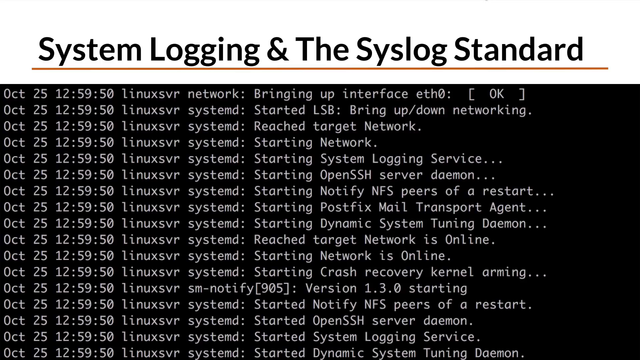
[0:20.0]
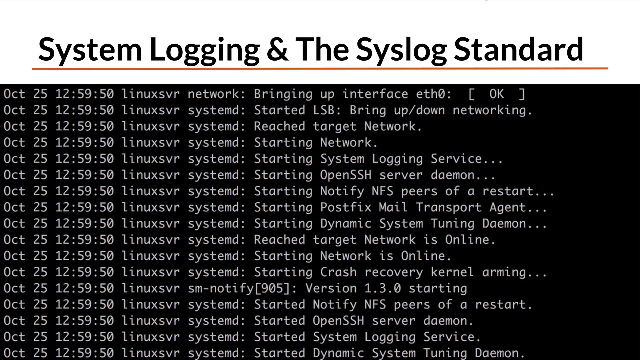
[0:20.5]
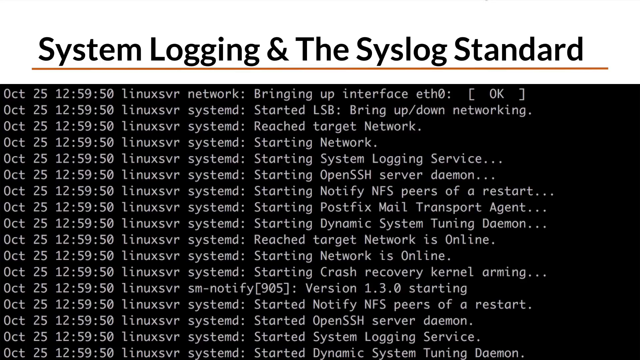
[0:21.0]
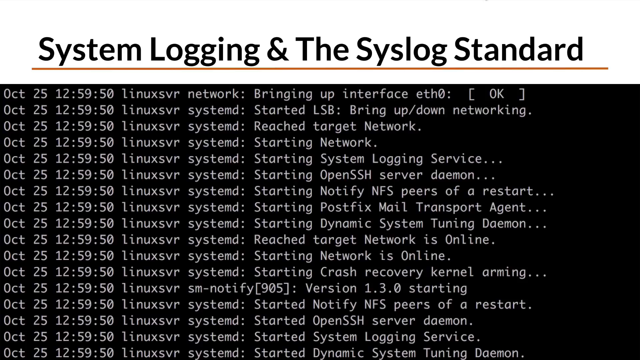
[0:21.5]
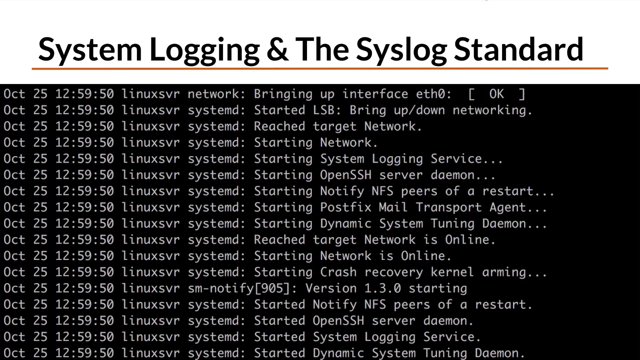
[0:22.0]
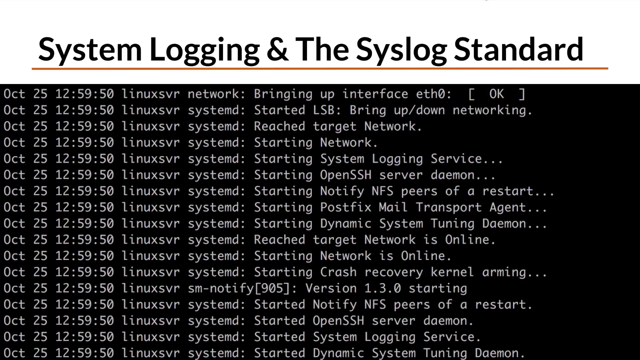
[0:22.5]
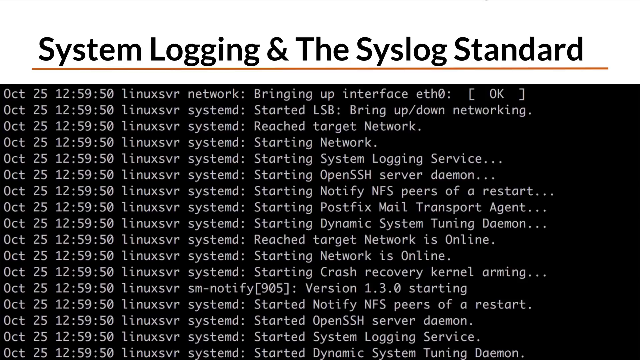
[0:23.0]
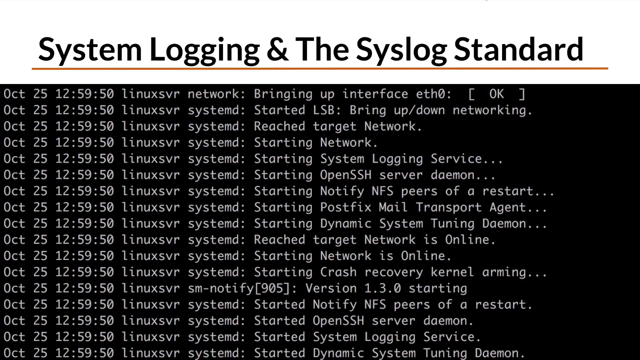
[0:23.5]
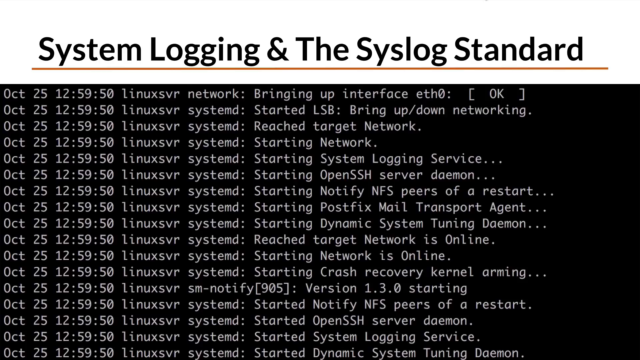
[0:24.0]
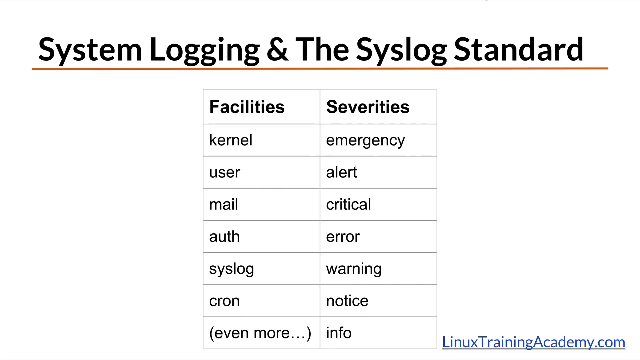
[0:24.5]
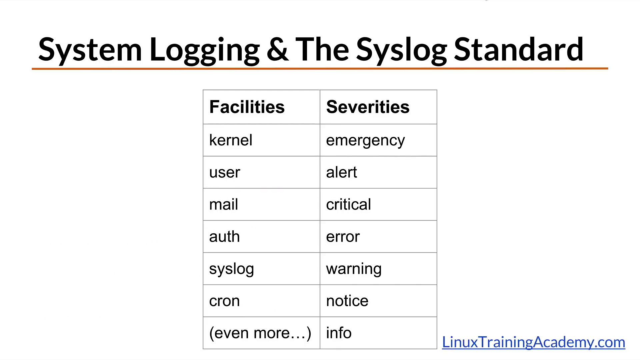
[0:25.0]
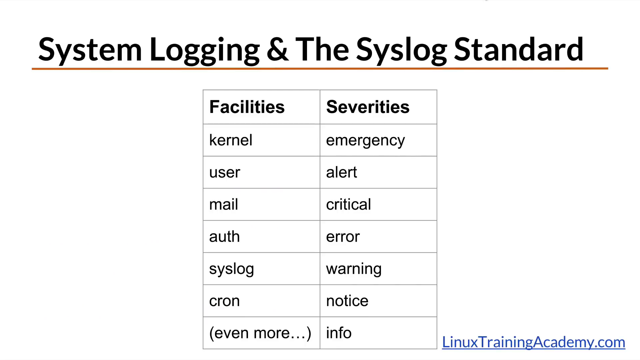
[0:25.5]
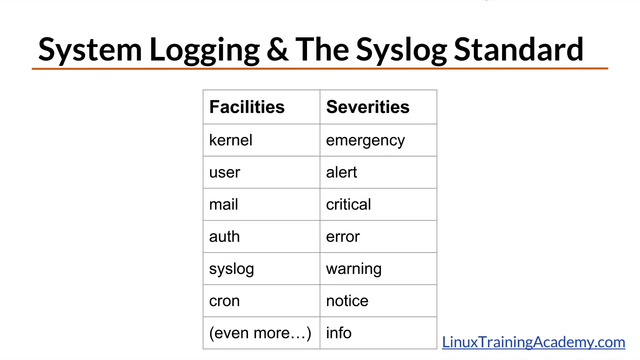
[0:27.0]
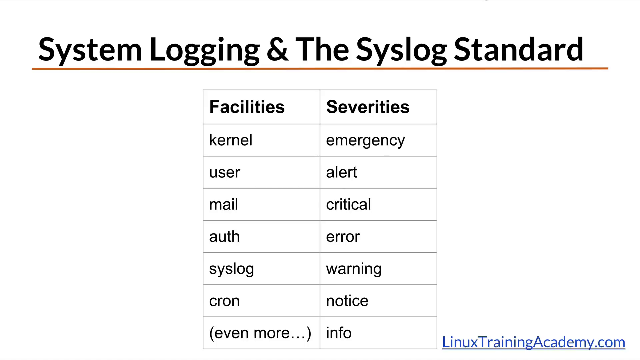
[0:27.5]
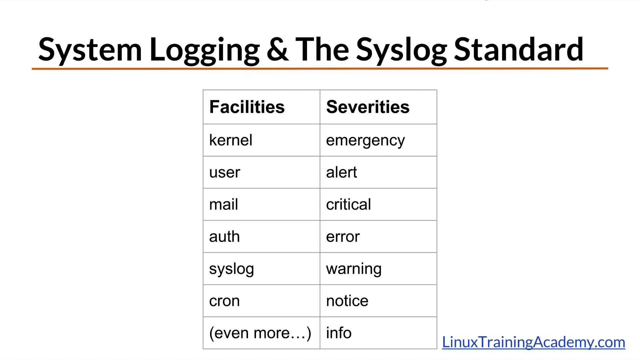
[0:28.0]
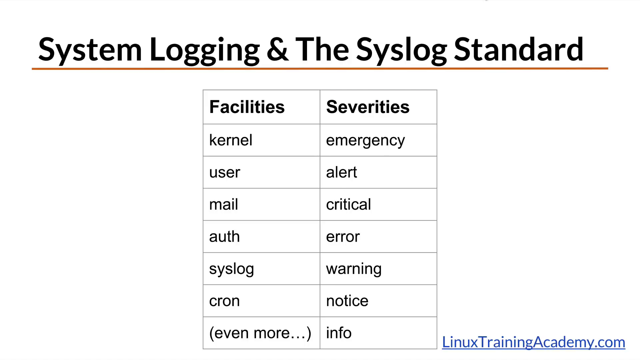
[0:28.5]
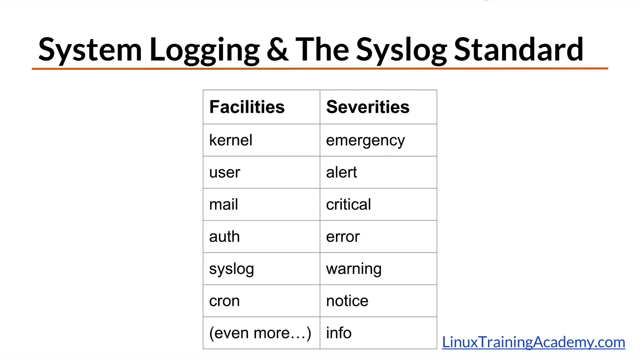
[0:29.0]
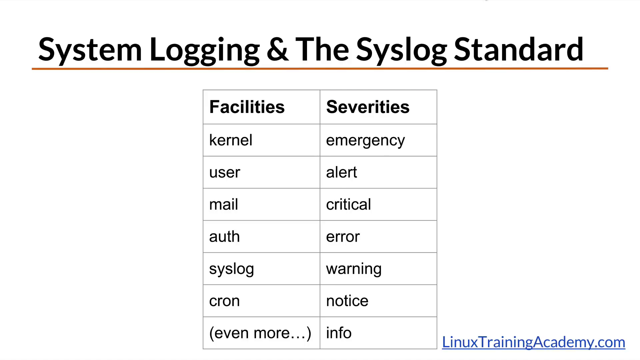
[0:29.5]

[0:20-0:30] Code made up of many lines of white text appears on a black background. The screen then quickly transitions to another screen with two columns side by side, one labeled "facilities" and the other "severities". The facilities are kernel, username, authorization, syslog and cron, and the severities column lists a number of other words.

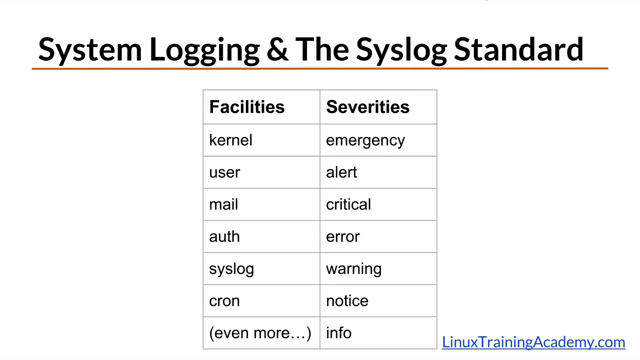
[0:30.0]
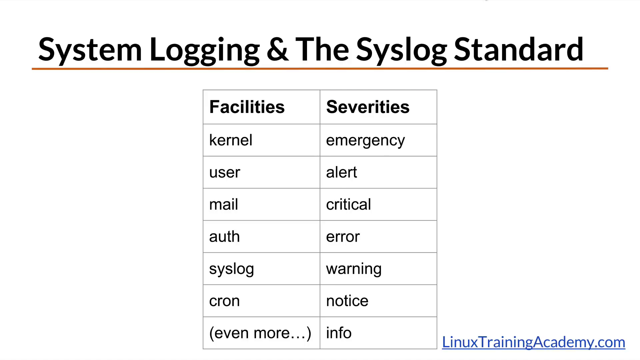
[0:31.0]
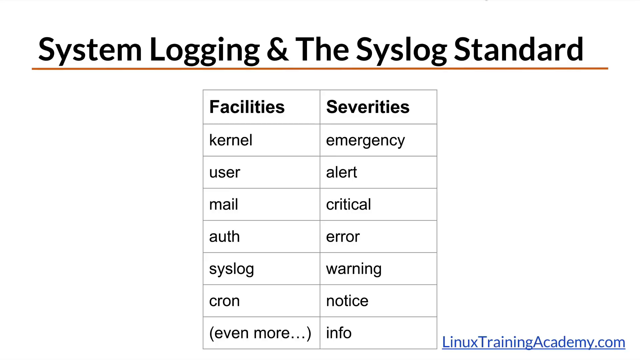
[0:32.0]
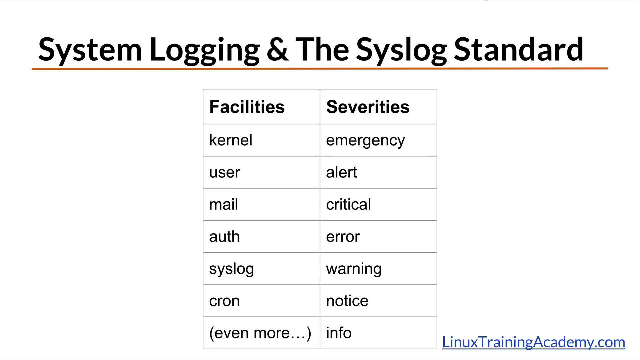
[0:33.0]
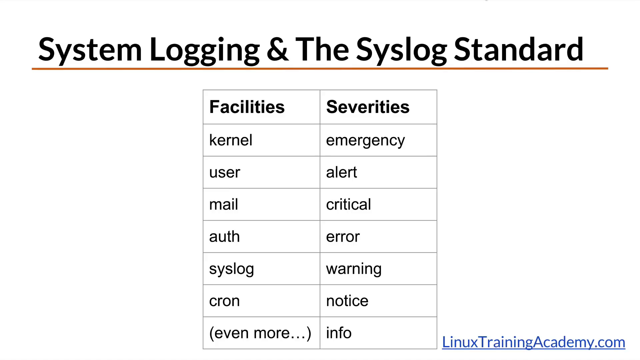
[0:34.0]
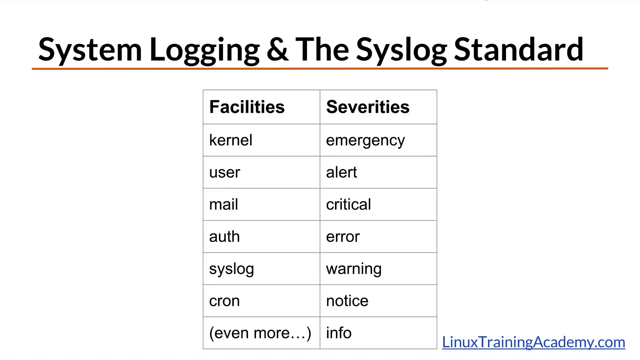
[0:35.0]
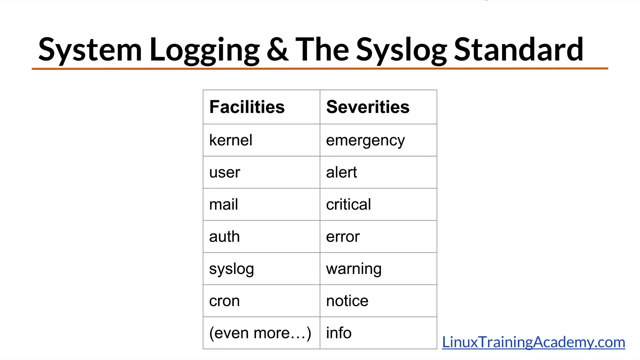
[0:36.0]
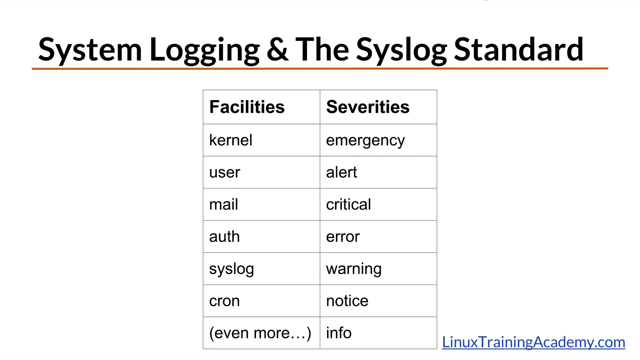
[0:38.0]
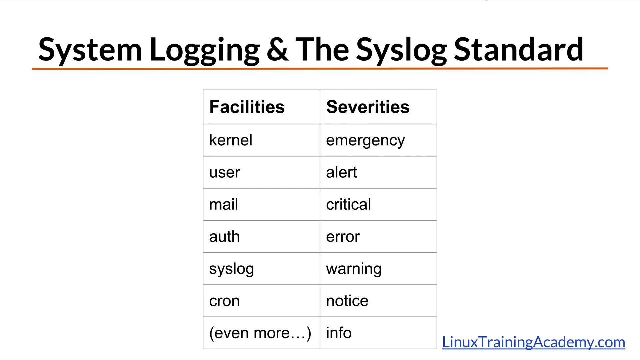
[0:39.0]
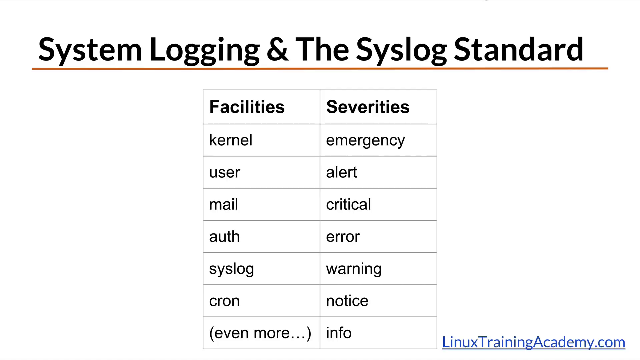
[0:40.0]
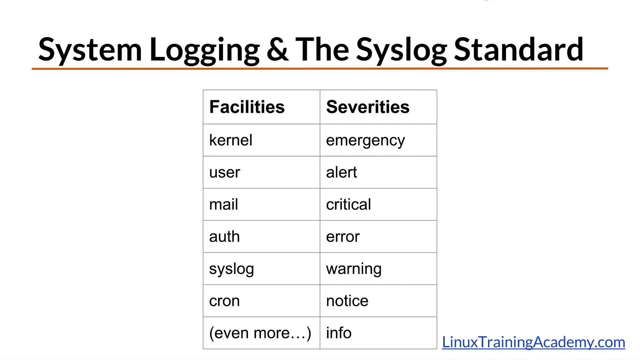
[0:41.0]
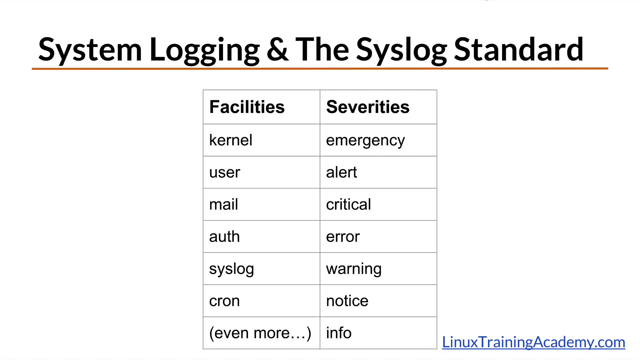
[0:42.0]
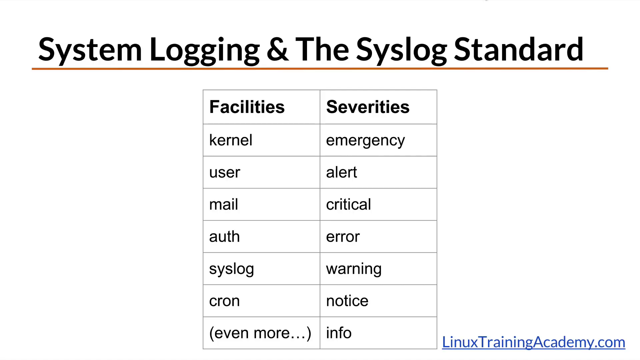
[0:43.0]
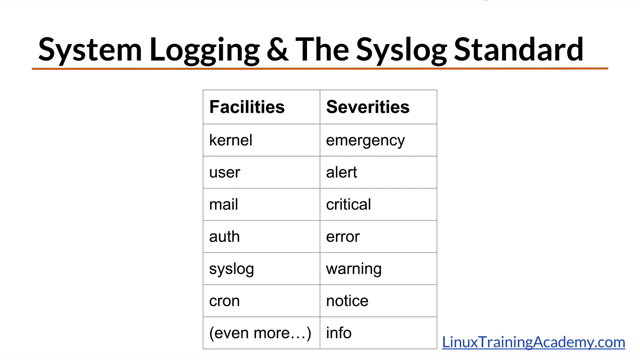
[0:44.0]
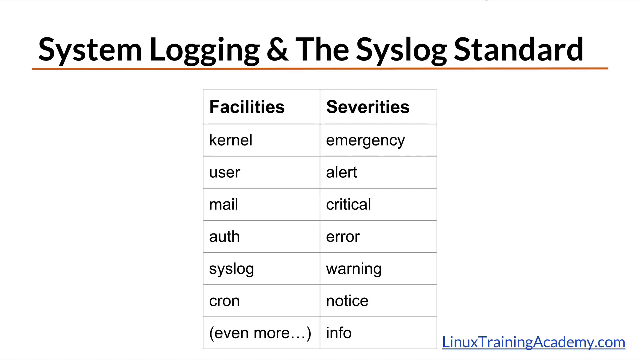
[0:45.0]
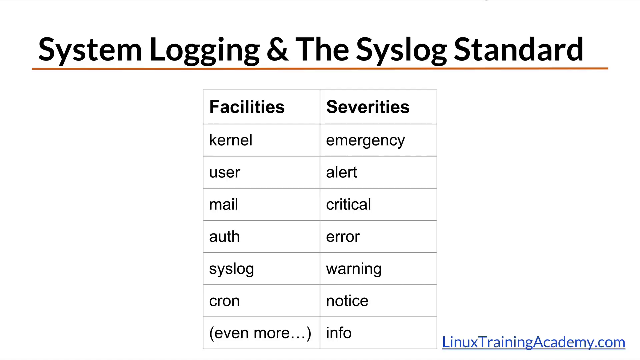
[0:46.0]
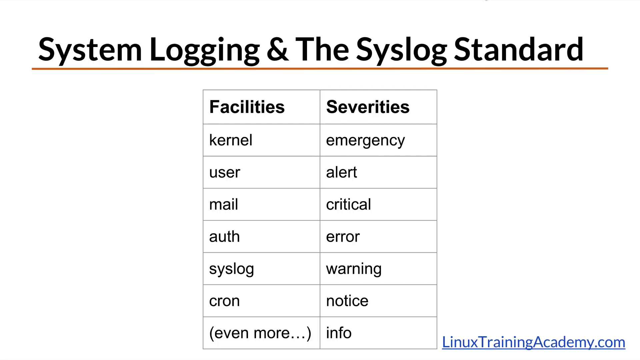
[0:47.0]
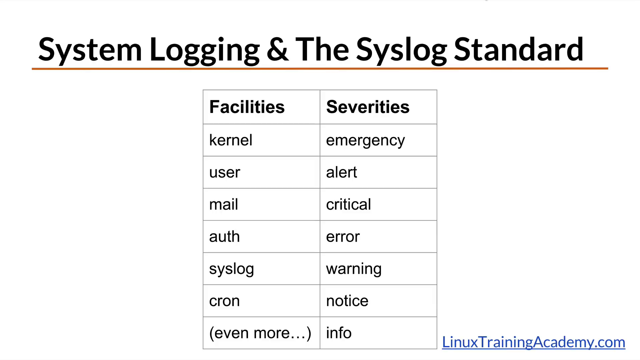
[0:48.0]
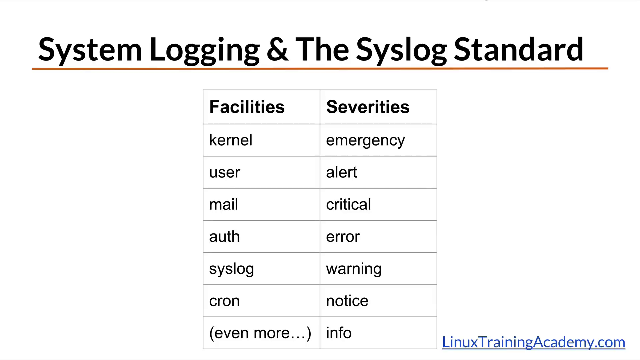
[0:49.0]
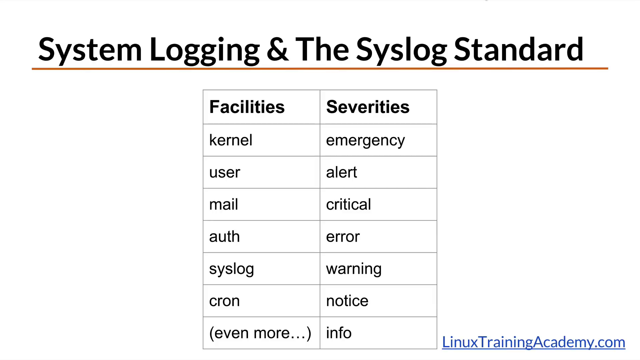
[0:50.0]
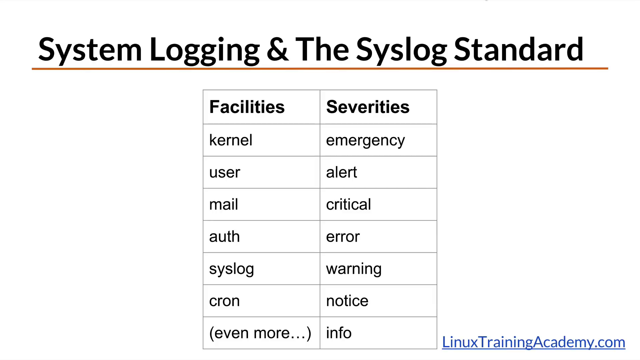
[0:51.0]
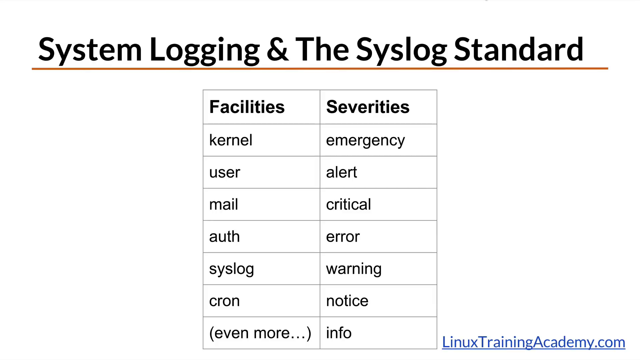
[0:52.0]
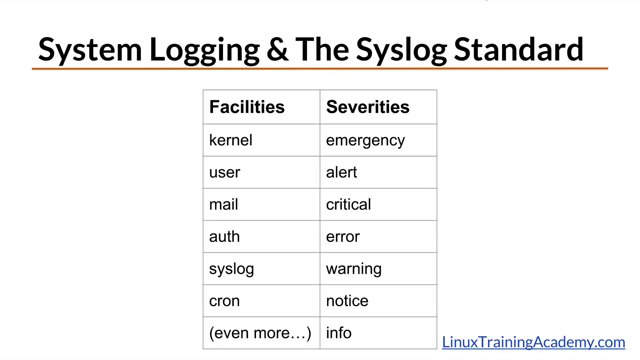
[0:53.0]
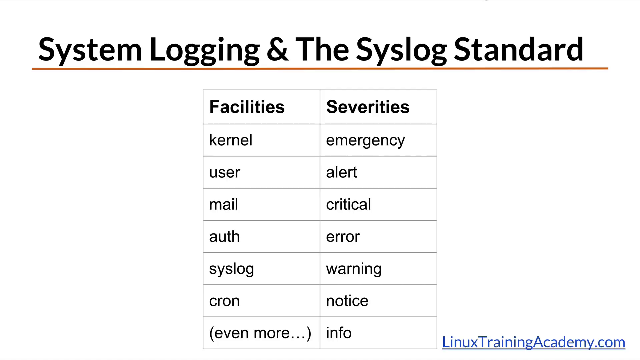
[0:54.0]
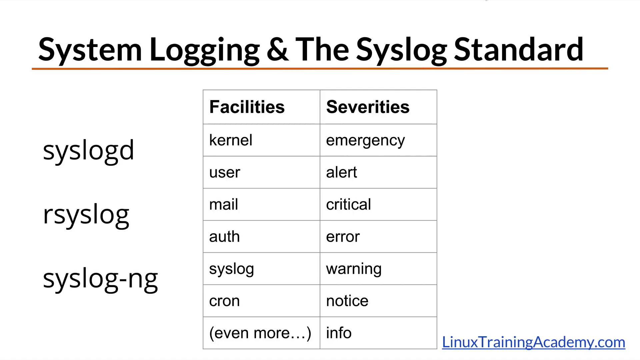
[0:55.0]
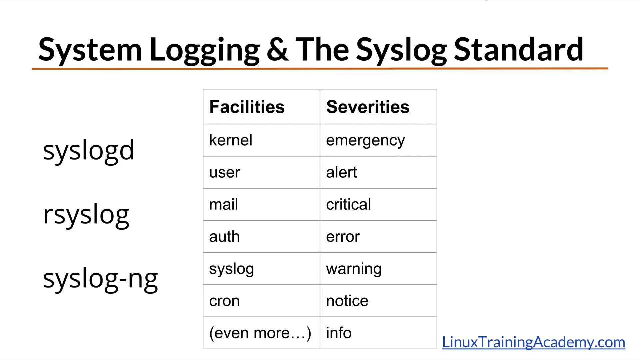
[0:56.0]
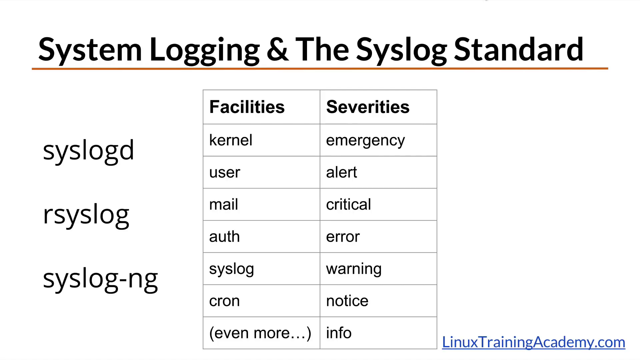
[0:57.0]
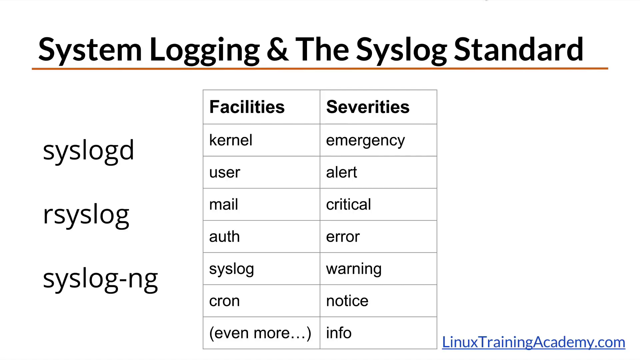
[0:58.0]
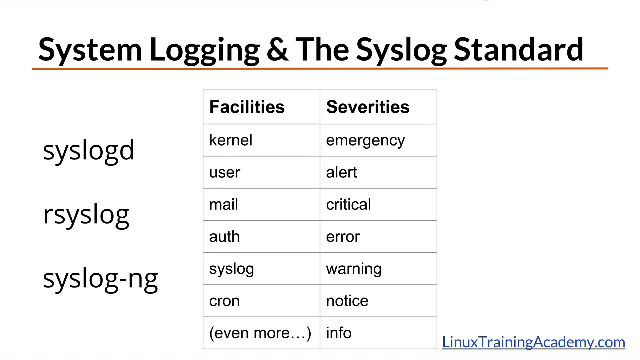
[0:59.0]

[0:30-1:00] A graphic refers to a syslog center and shows two columns right next to each other: one column is facilities and the other is severities. The facilities column lists miscellaneous, authorization and syslog, and the severities column lists emergency, alert, error, warning, notice and info. Code in white text on a black background is also shown.